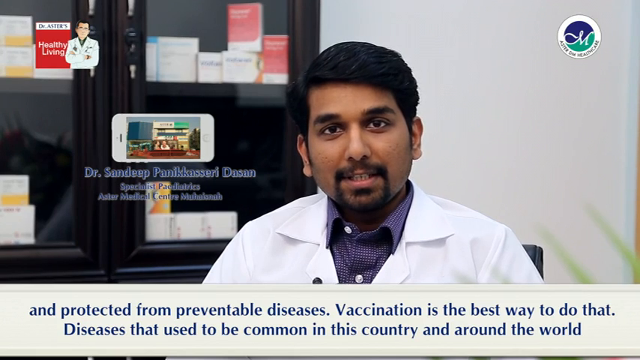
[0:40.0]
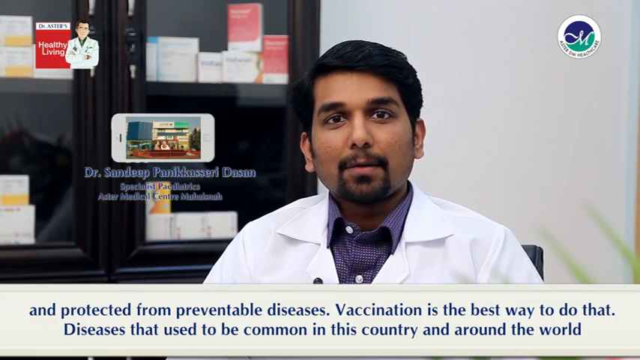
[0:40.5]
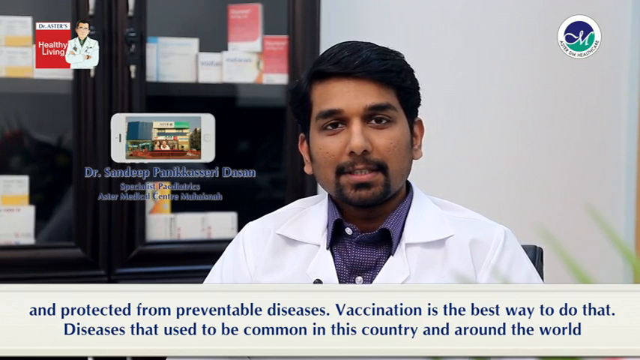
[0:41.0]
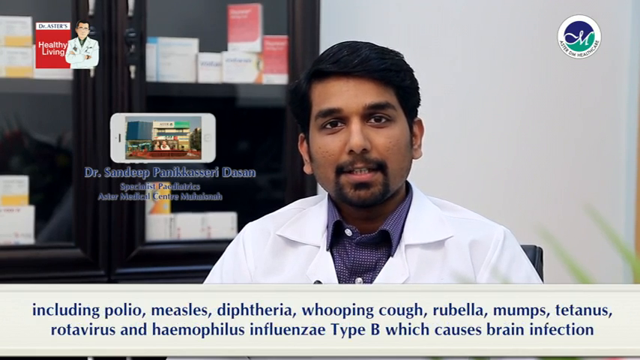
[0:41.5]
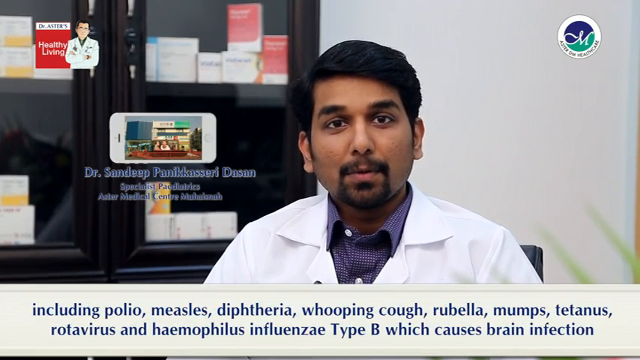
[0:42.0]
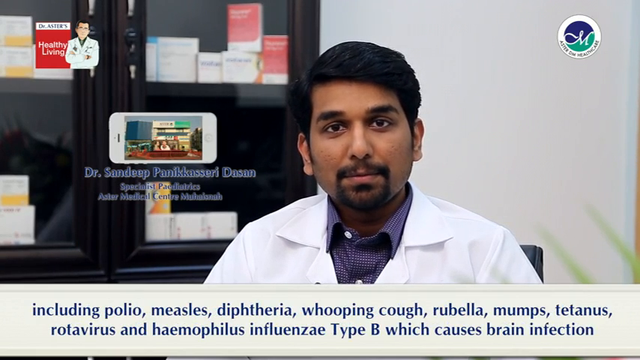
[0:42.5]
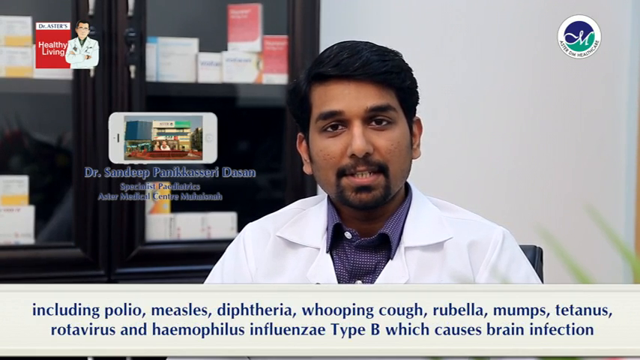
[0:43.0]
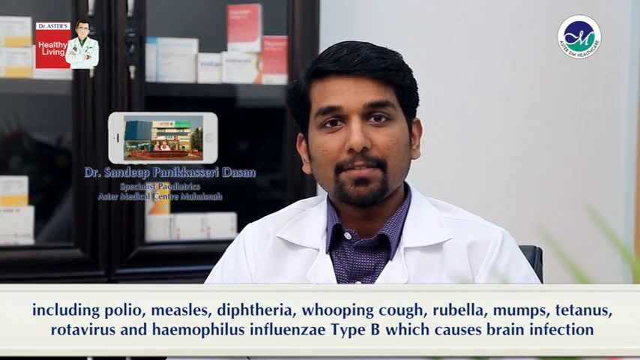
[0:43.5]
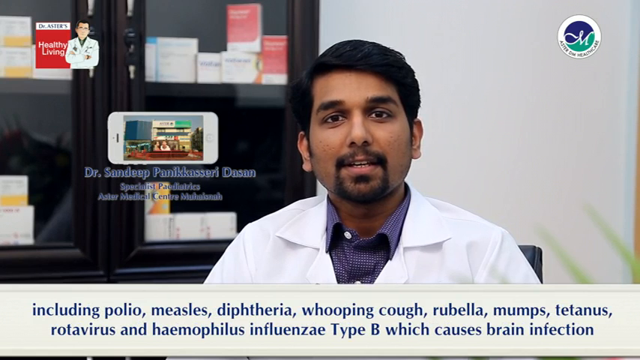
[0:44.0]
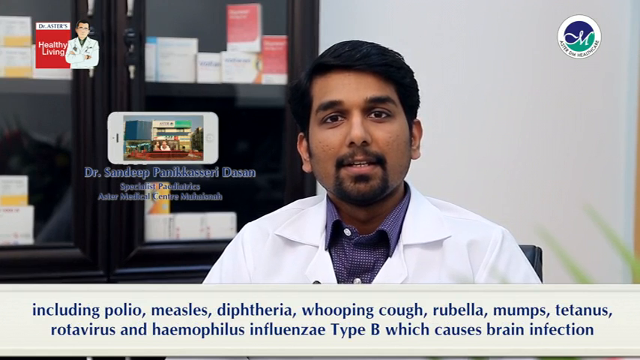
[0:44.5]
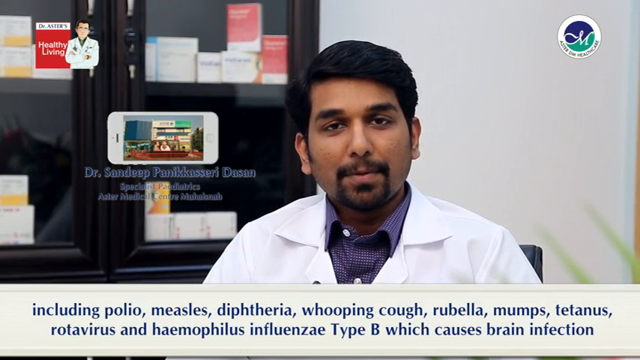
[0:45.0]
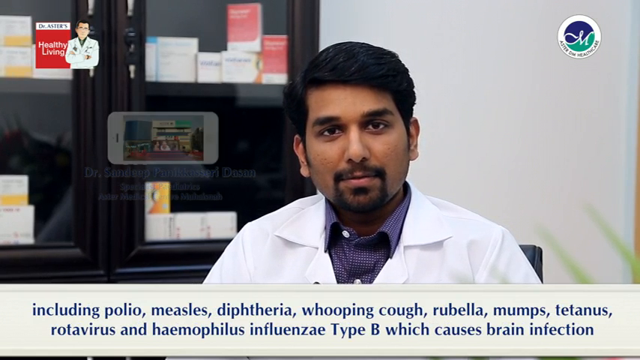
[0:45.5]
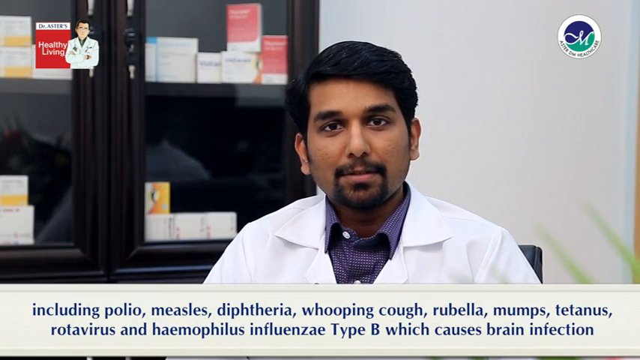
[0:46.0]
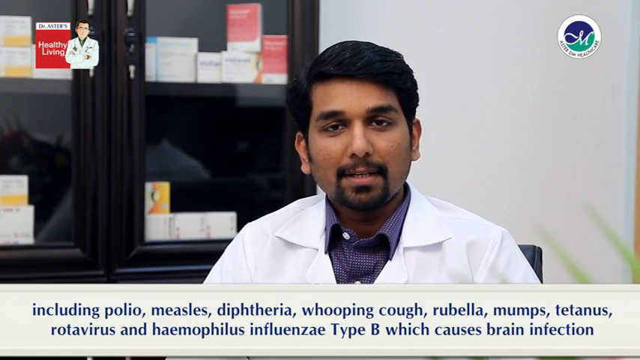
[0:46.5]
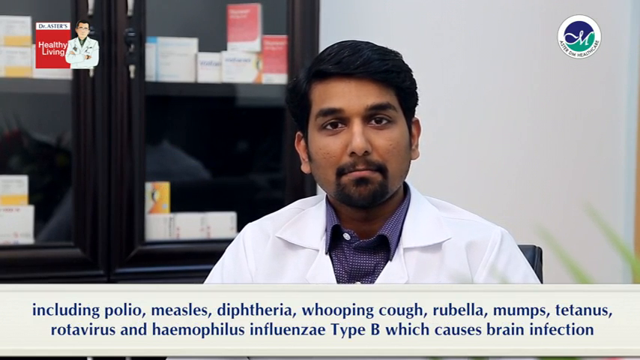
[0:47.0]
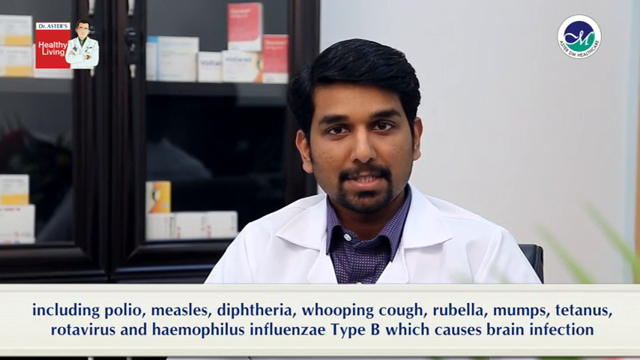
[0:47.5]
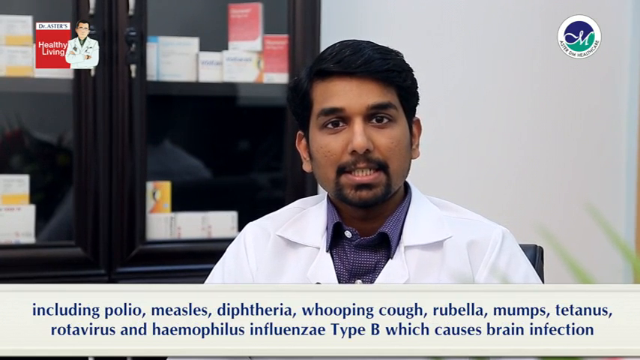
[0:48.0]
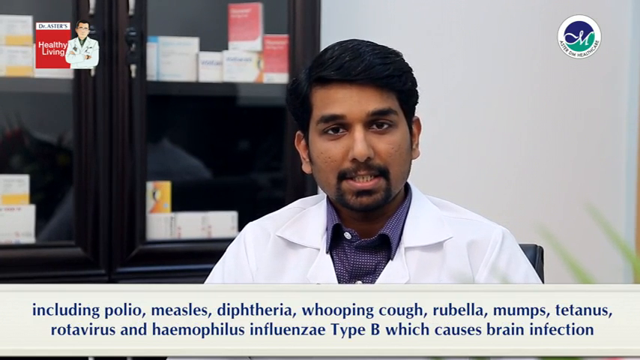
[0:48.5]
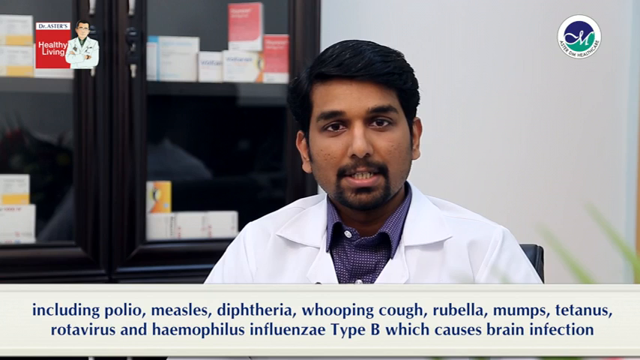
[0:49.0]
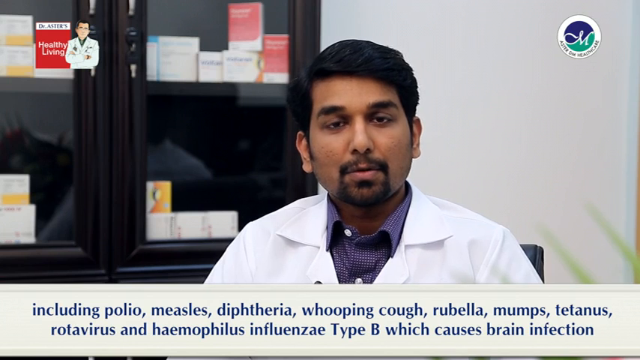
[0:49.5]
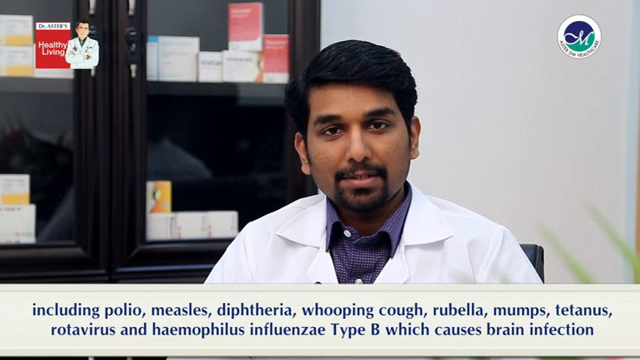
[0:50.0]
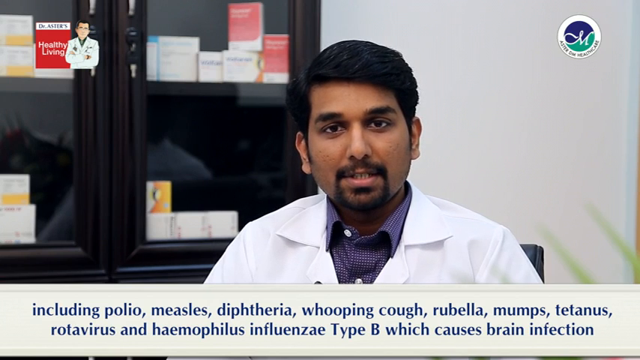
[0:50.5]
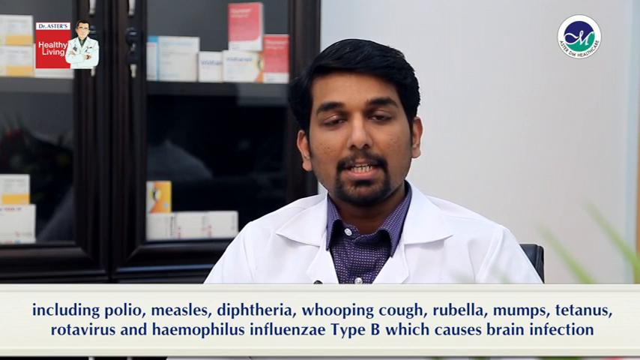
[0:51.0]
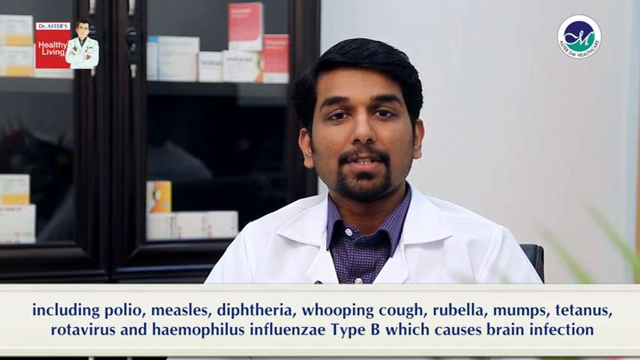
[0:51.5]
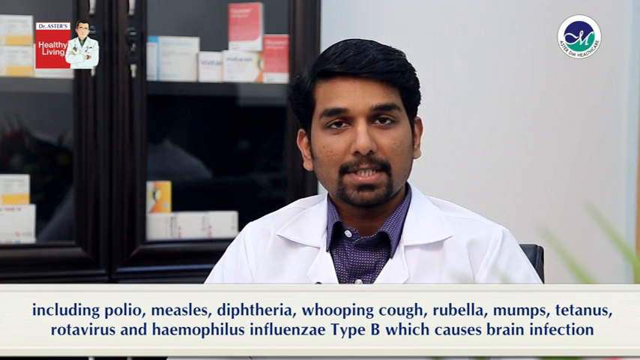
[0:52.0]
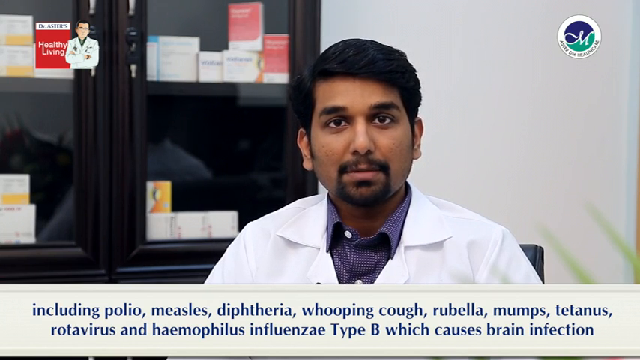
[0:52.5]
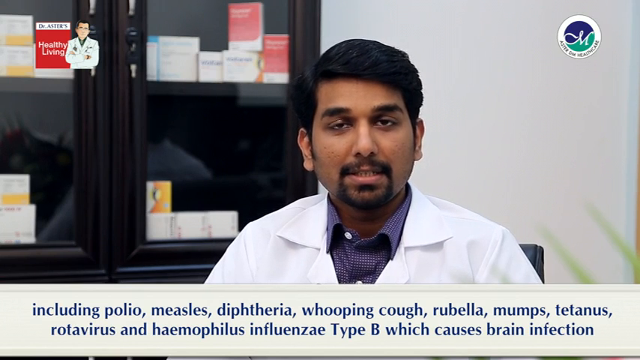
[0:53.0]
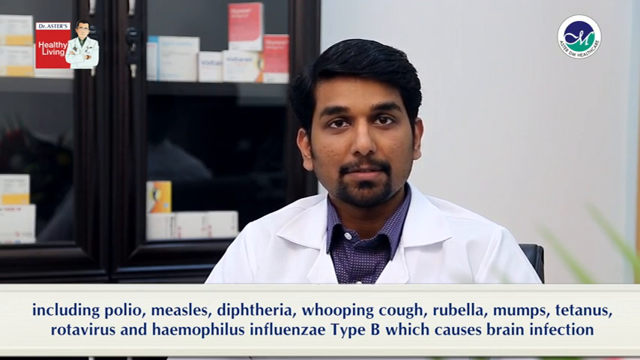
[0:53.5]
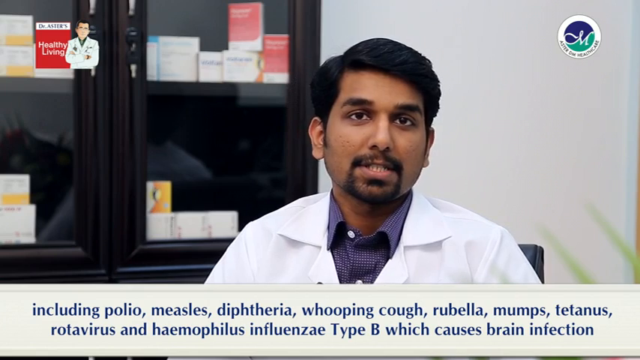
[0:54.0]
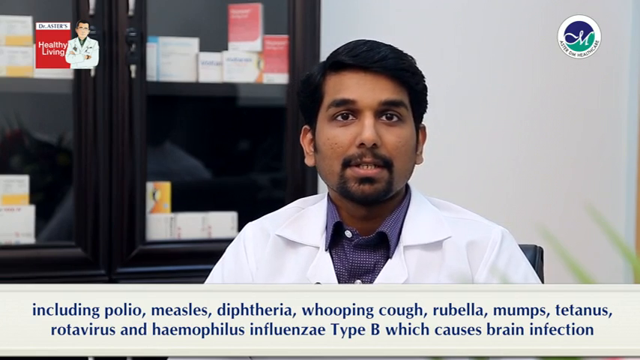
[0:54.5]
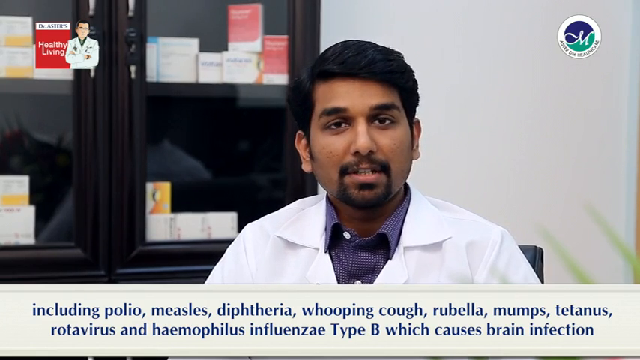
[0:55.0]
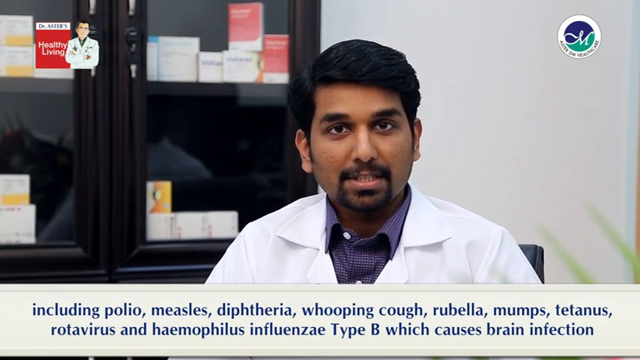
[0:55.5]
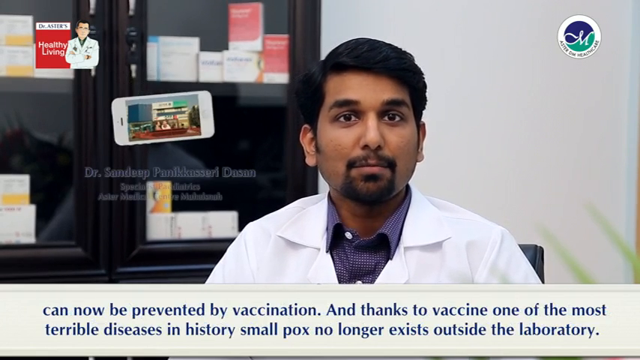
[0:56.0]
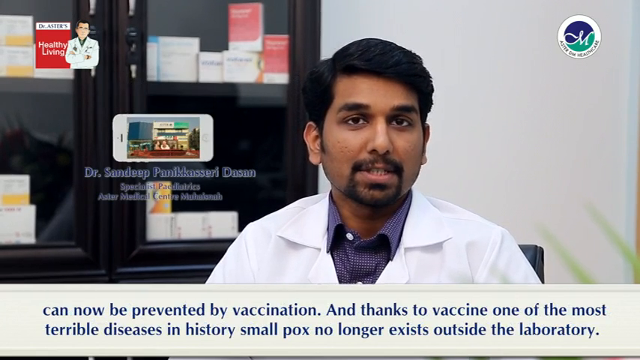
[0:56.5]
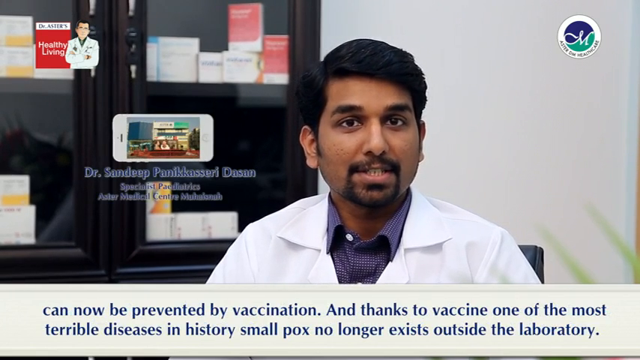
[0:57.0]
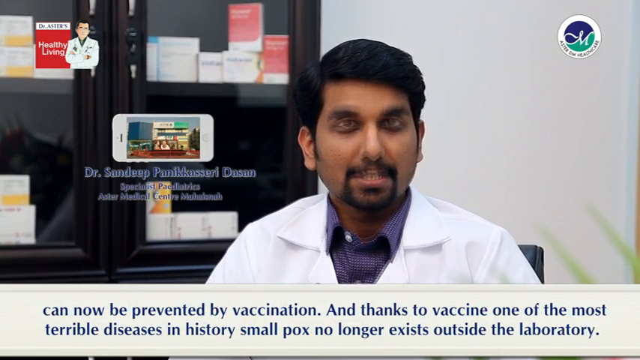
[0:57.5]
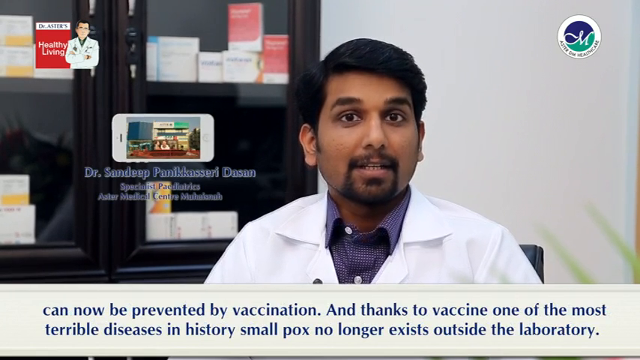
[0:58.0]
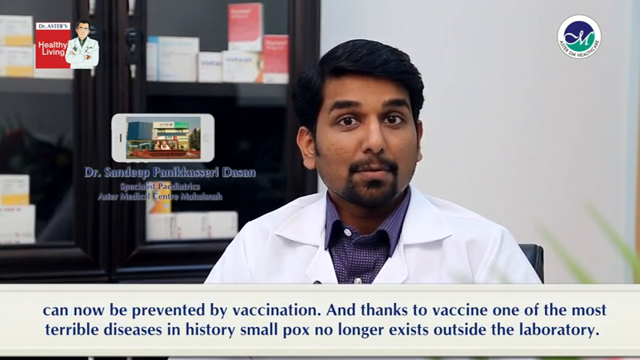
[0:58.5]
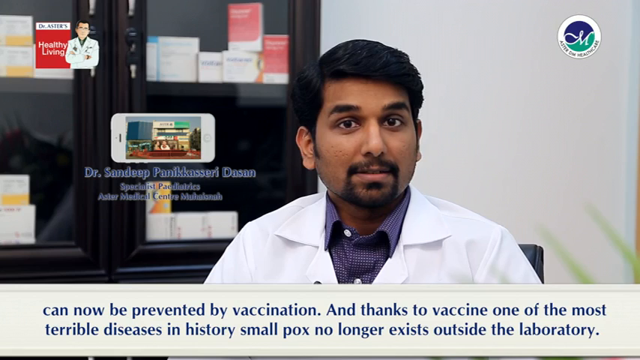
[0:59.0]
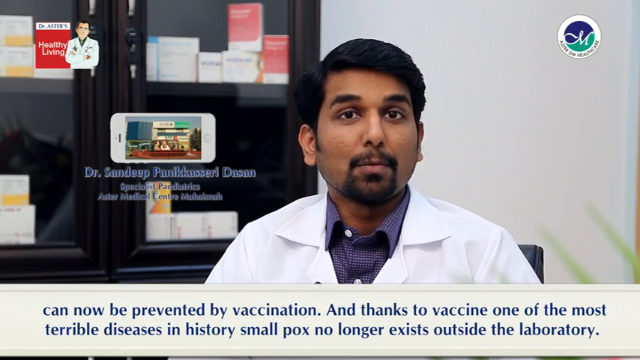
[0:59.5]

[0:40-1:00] An Indian man sits in a chair speaking into the camera, wearing a purple button-up shirt with the top button unbuttoned and a white doctor's coat over it. Behind him is a black bookcase with a few shelves holding boxes of something. In blue text on a white strip along the bottom of the screen, the captions read: "and protected from preventable diseases. Vaccination is the best way to do that. Diseases that used to be common in this country and around the world, including polio, measles, diphtheria, whooping cough, rubella, mumps, tetanus, rotavirus, and influenza type B, which causes brain infection, can now be prevented by vaccination and thanks to vaccine one of the most terrible diseases in history, smallpox no longer exists outside the laboratory." While the text appears, he simply sits speaking to the camera.